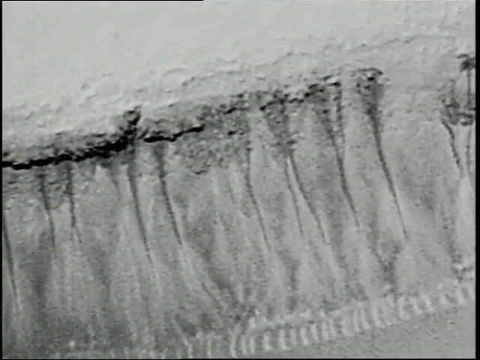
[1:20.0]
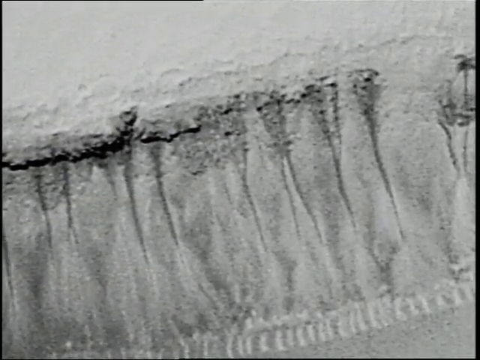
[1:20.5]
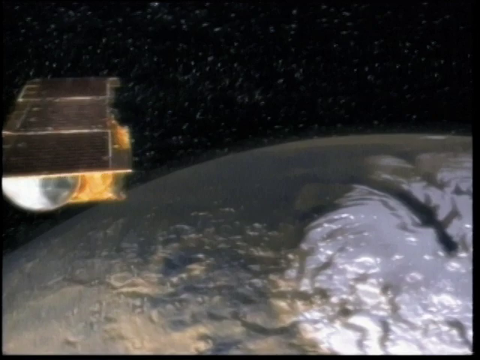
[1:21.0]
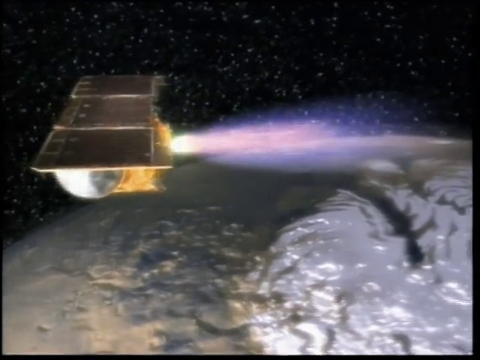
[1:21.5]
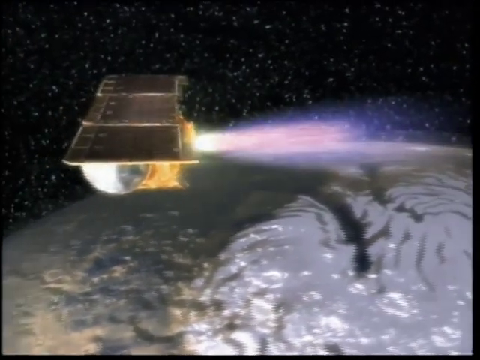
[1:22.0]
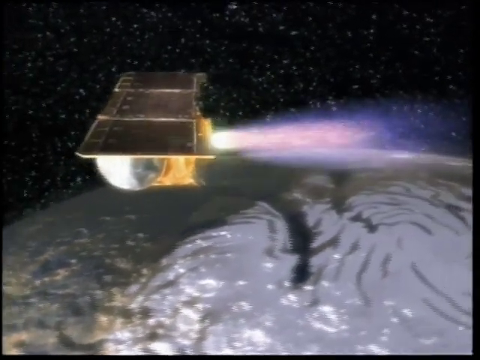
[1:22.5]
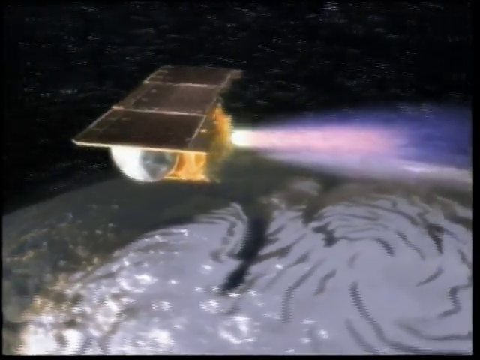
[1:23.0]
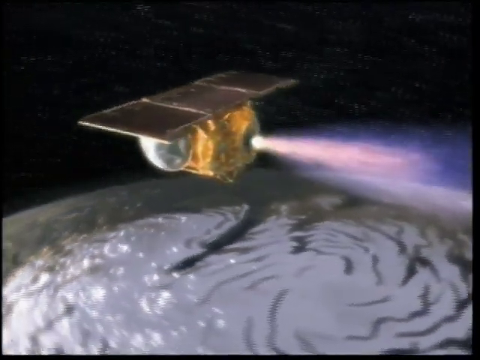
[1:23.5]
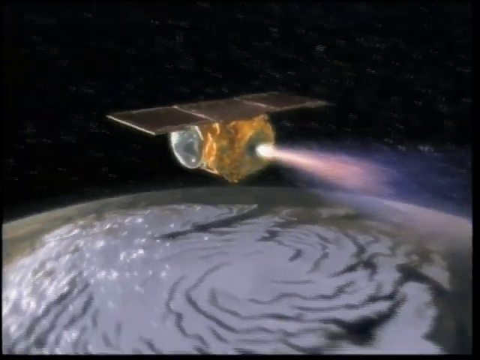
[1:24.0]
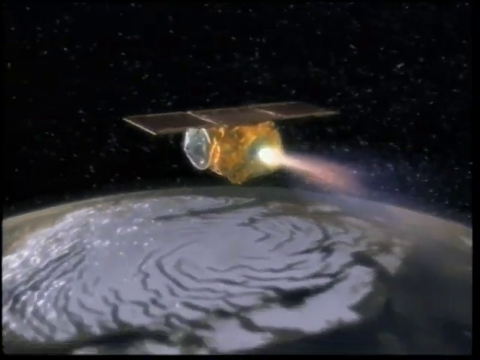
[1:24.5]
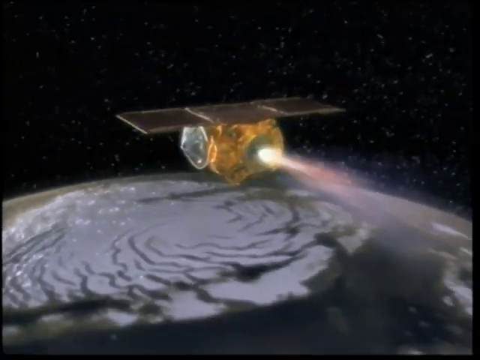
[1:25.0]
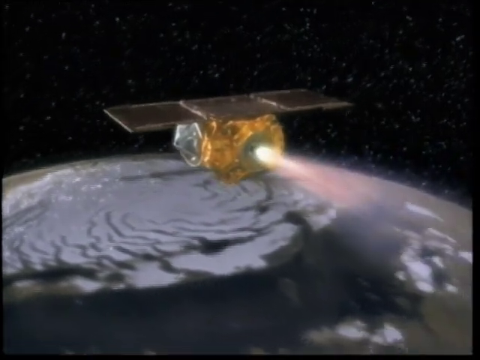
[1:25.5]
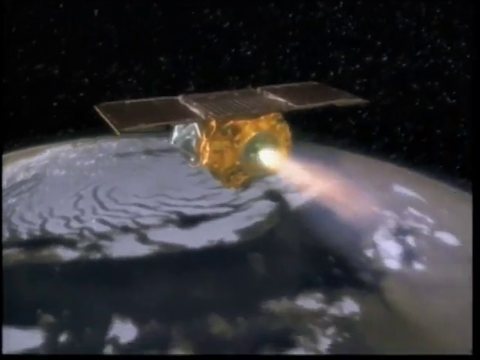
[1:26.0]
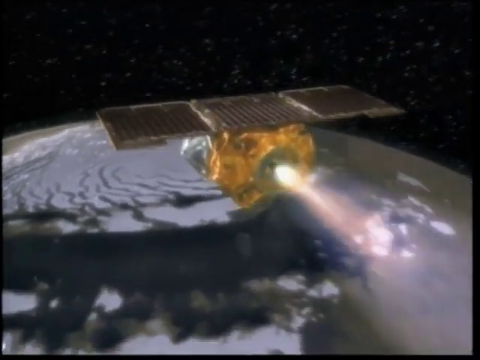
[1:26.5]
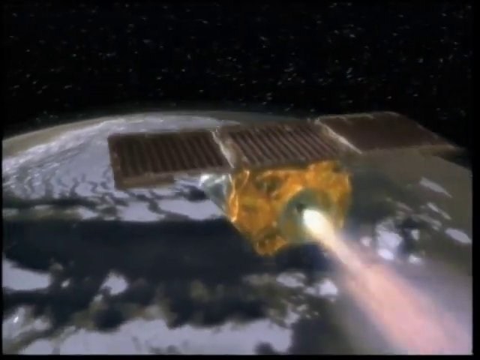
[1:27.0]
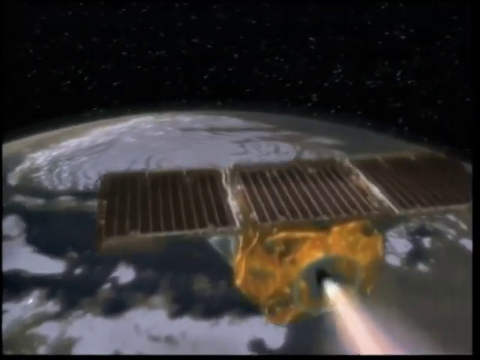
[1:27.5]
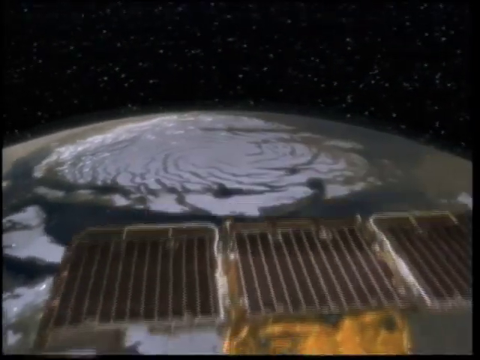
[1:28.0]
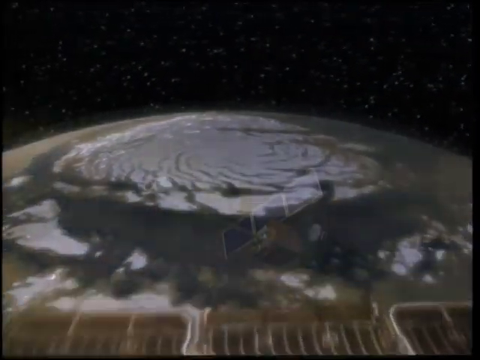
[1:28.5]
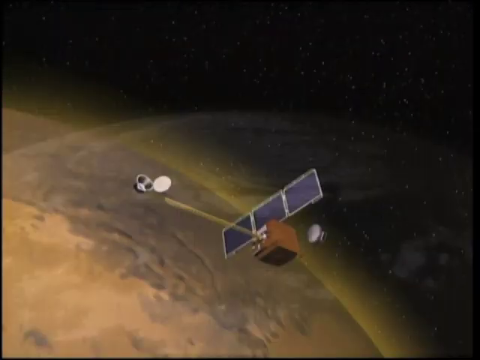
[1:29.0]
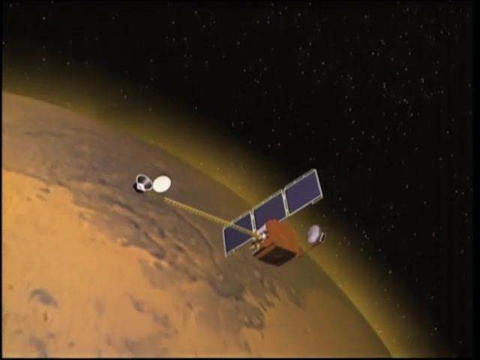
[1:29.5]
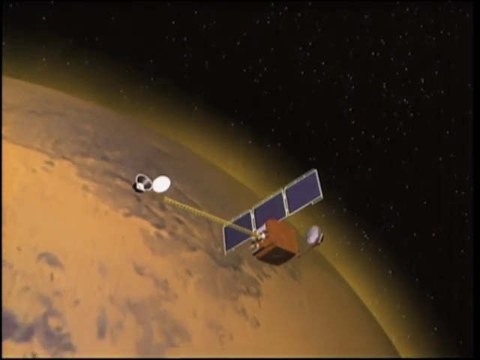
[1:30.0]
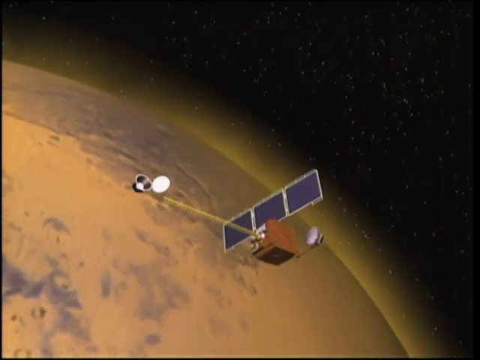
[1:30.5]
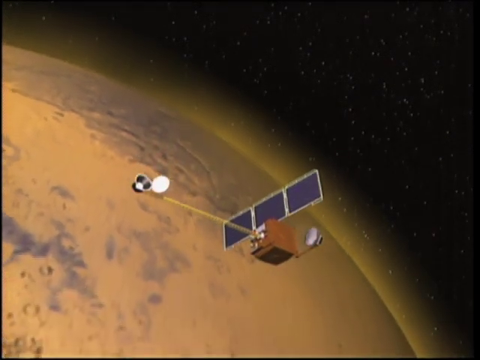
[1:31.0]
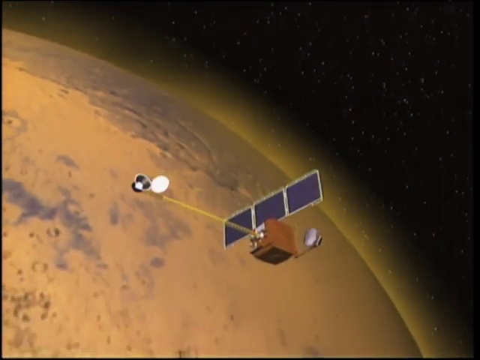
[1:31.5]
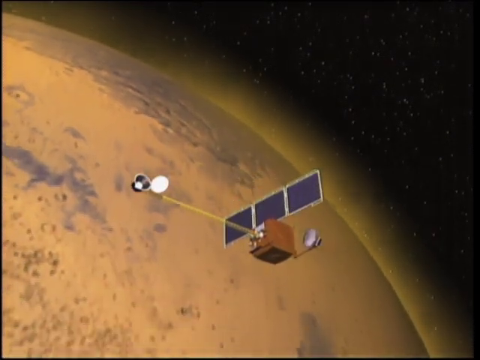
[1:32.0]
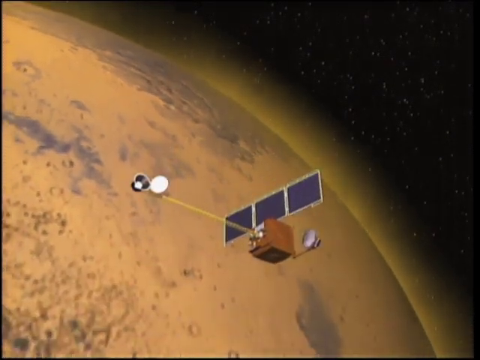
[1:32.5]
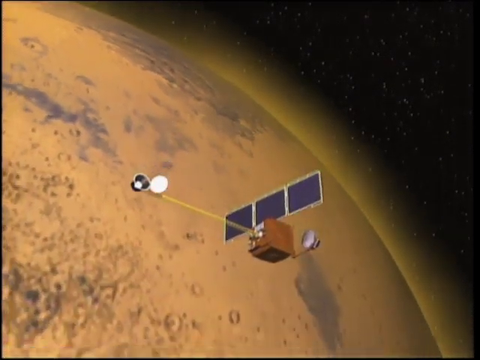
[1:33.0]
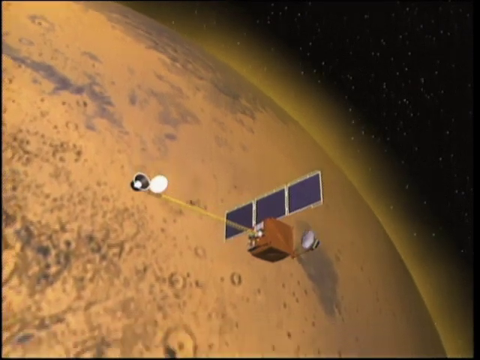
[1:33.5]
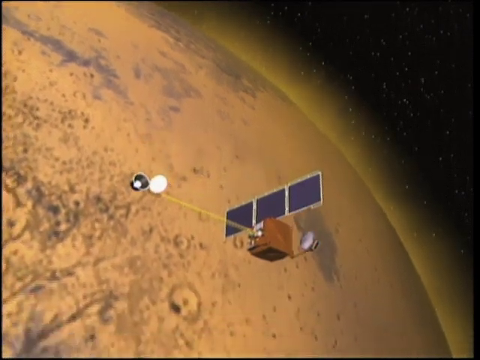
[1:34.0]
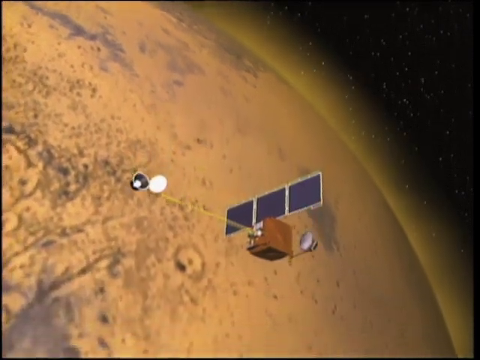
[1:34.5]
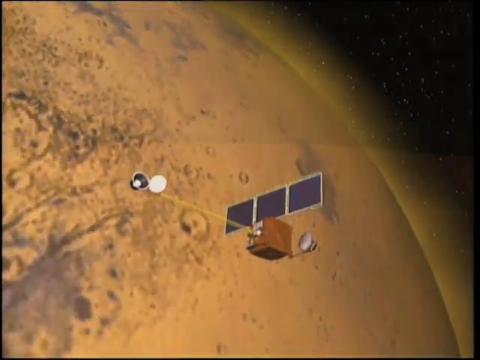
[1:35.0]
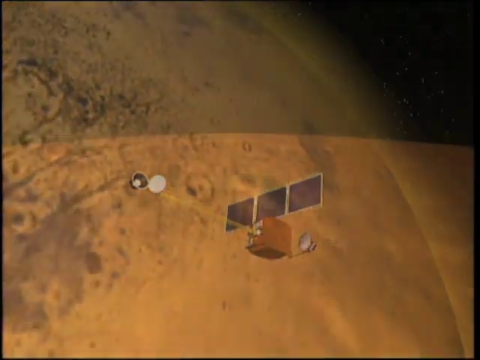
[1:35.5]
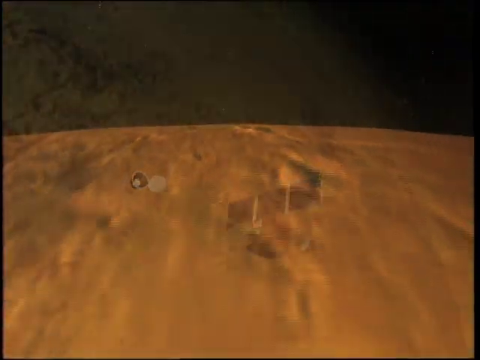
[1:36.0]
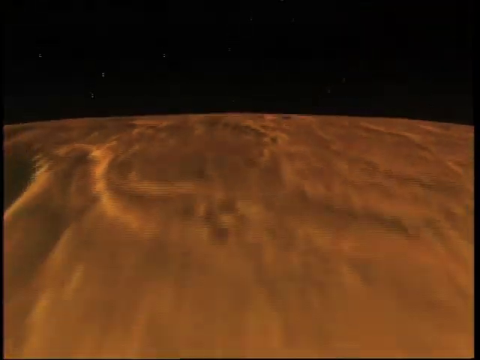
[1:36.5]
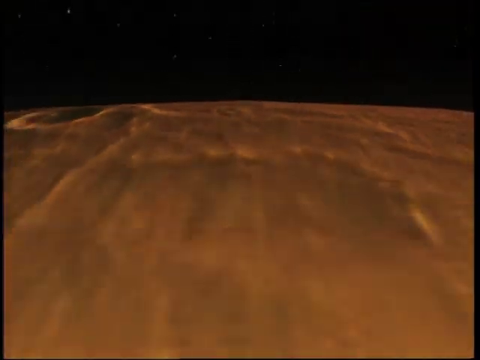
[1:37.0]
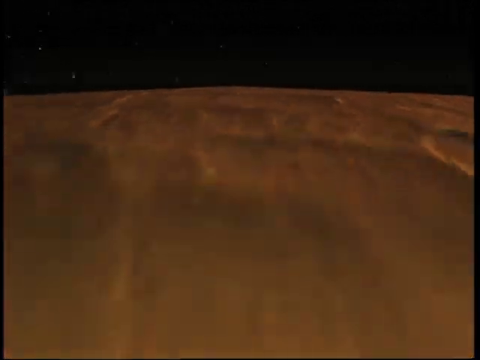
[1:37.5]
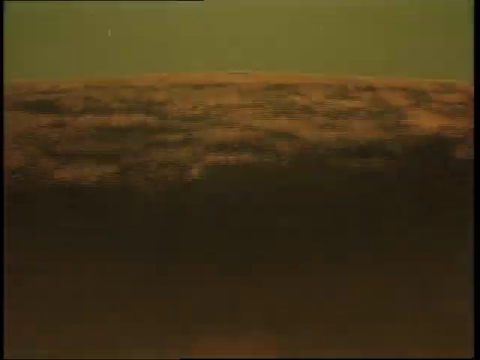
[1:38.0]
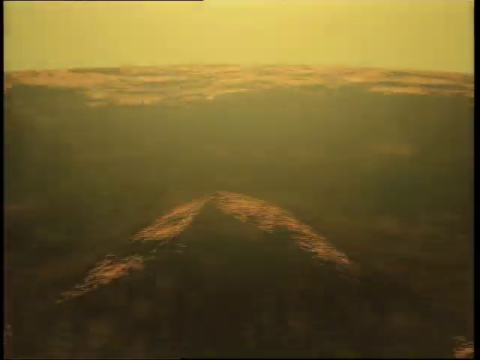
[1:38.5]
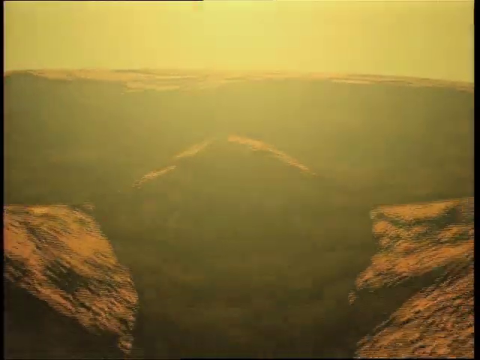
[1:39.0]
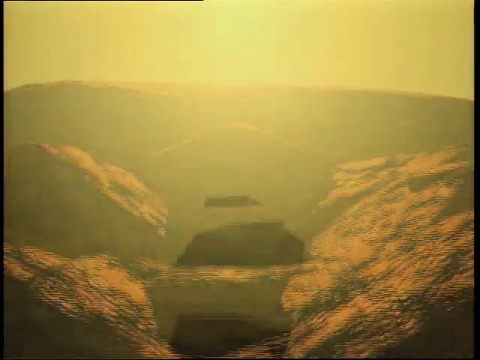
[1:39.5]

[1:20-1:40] A close grayscale aerial view shows a landmass of some sort, with what looks like a cliff edge with vertical grooves and depressions probably created by erosion. Next, an animation shows a satellite that looks like it is attached to rocket boosters, traveling over a landmass; it looks like it might be what is capturing the imagery. It has what look like three wings, resembling three solar panels attached to each other, a cube-shaped body, and what looks like a long metal rod projecting from the cube with two cylindrical components on the end. It seems to be traveling and mapping or taking images of the reddish-brown planet below. The camera pans quickly over the planet's rough edges, and as the view gets closer, what look like peaks and valleys of the reddish planet come into view.